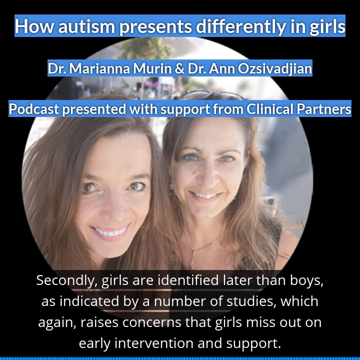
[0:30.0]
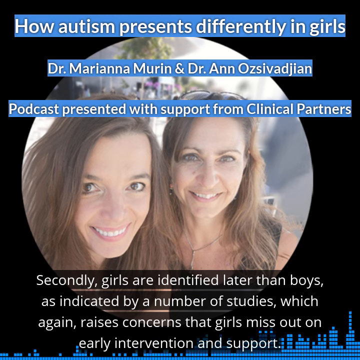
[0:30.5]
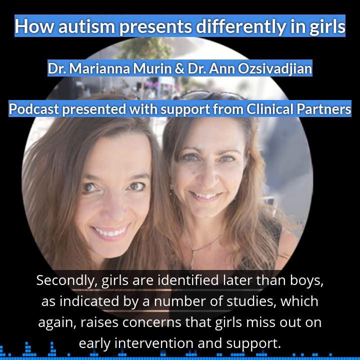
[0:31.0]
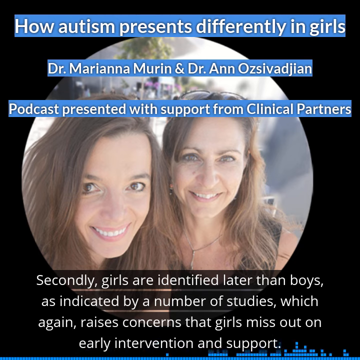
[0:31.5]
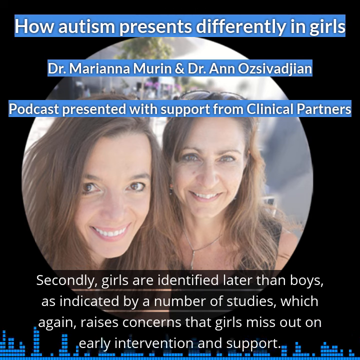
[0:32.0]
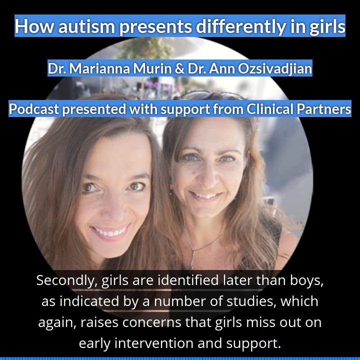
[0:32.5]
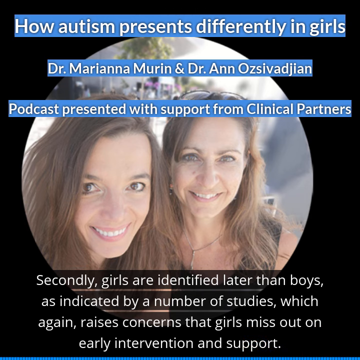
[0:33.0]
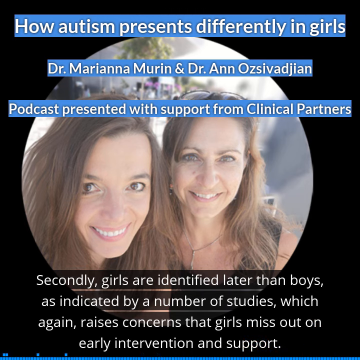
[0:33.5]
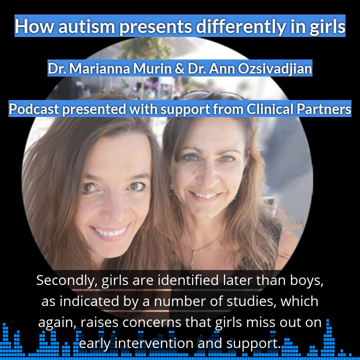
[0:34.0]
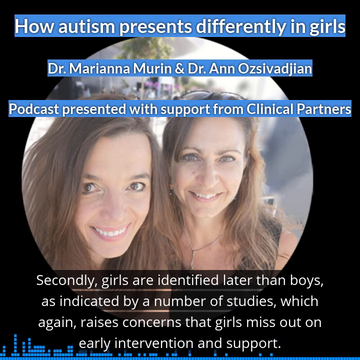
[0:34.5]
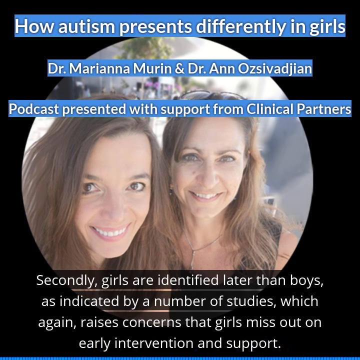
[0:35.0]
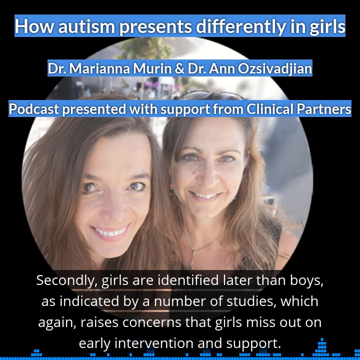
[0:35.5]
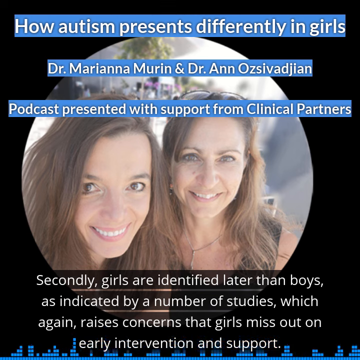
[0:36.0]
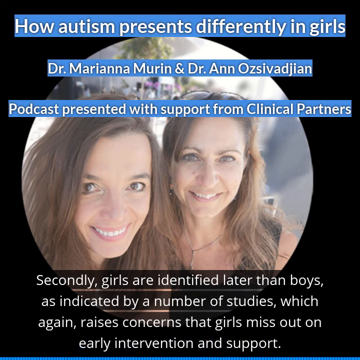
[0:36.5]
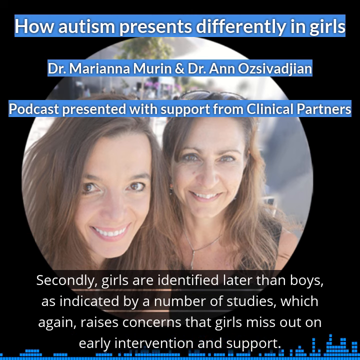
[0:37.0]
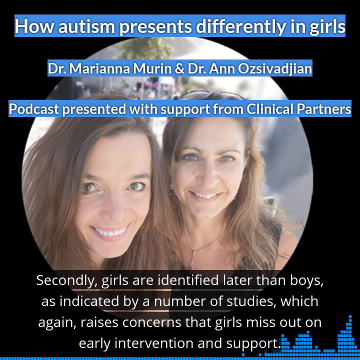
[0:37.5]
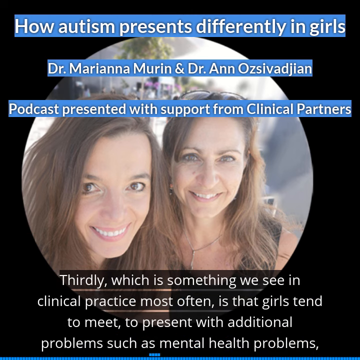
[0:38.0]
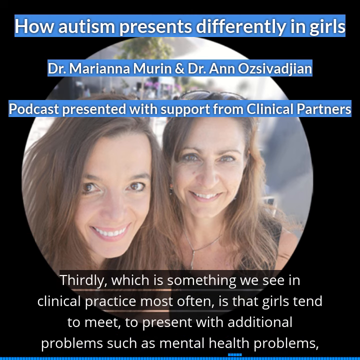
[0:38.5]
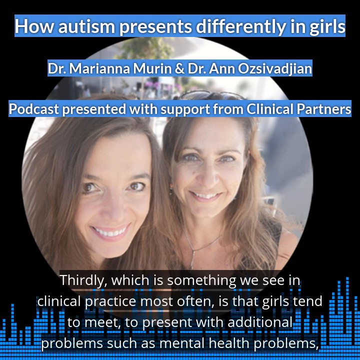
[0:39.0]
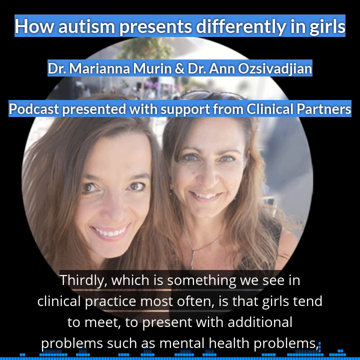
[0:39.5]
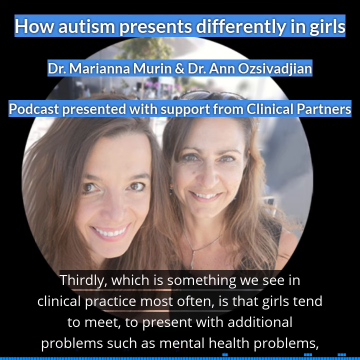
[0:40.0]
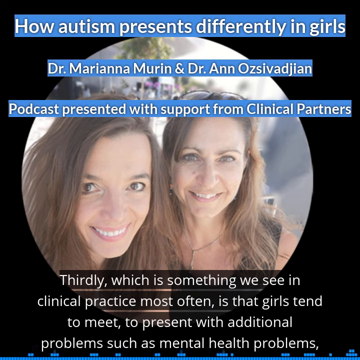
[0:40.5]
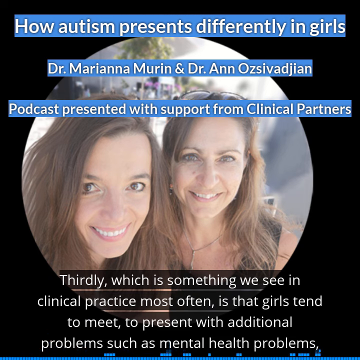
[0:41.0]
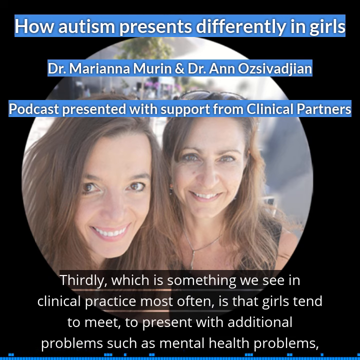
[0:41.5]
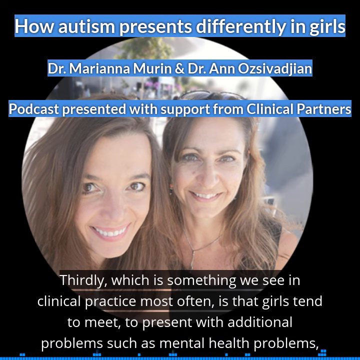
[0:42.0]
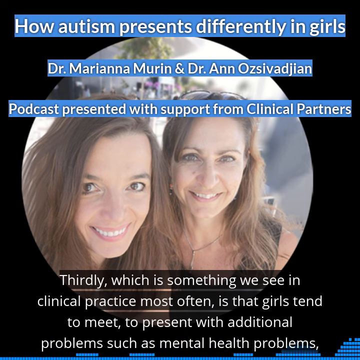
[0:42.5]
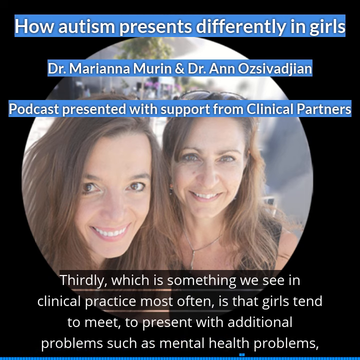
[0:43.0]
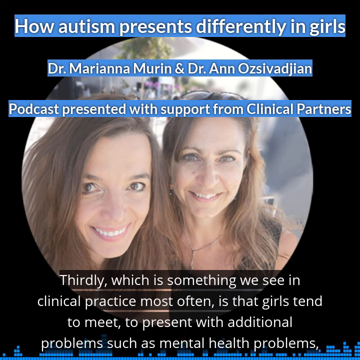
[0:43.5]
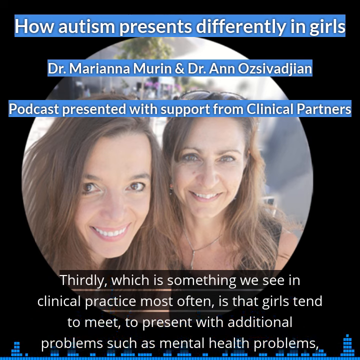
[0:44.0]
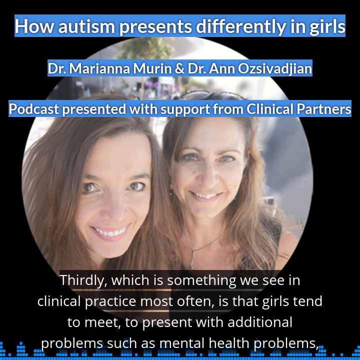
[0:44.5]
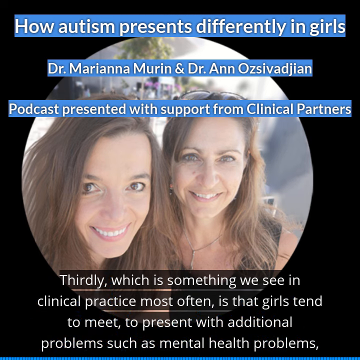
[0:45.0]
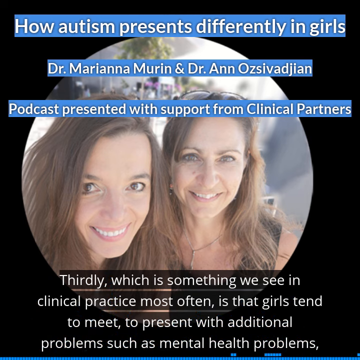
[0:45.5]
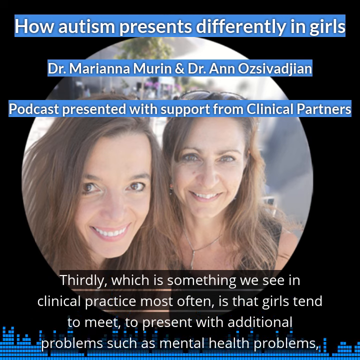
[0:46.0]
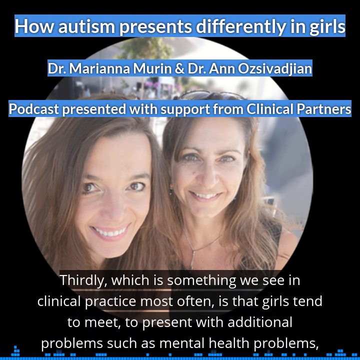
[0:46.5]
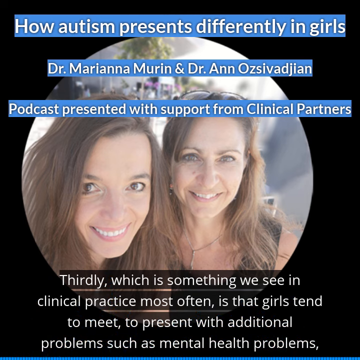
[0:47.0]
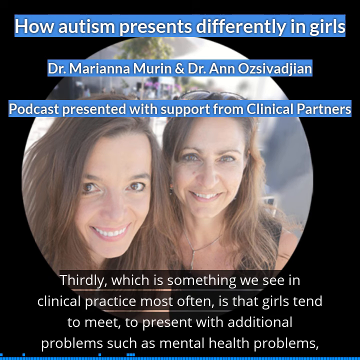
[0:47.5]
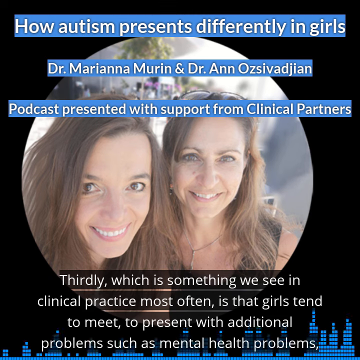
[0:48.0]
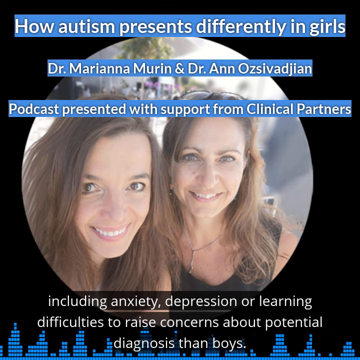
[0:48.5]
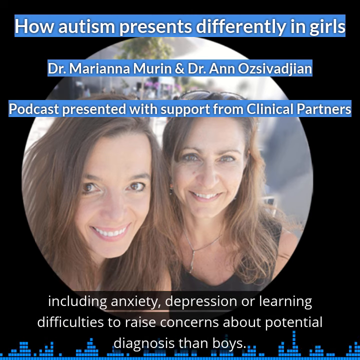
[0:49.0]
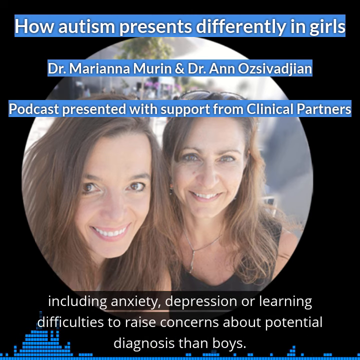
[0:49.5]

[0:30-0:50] The podcast screen continues with a circular image of two girls, both with dark hair and light skin, on a black background. At the top of the screen are the title, the names of the two doctors, and information about the podcast and its sponsors, in white text on a blue highlight. Below the image are captions for the podcast in white text highlighted in black. The captions state that autism in girls is usually identified later than in boys, so they miss out on early intervention, and that girls with autism tend to have more mental health issues, such as anxiety, depression, or learning difficulties. Behind the captions are blue flashing bars, apparently indicating audio or voice changes in the podcast.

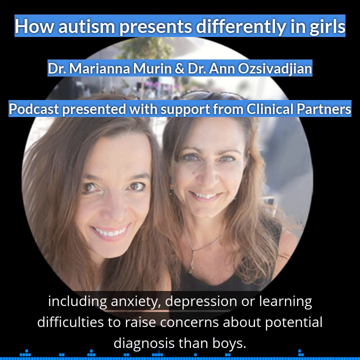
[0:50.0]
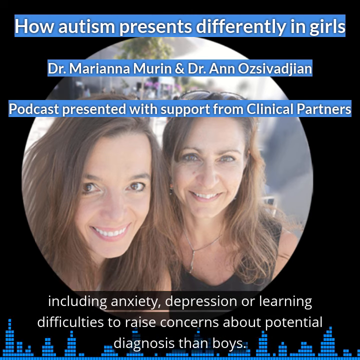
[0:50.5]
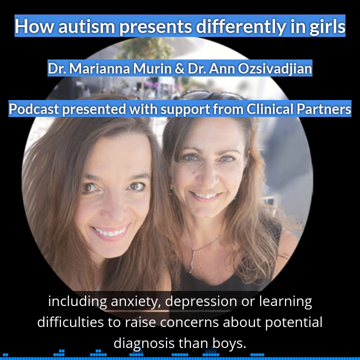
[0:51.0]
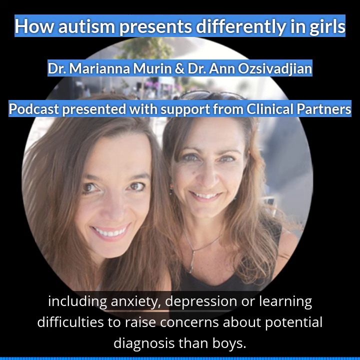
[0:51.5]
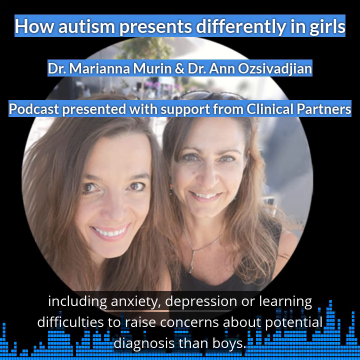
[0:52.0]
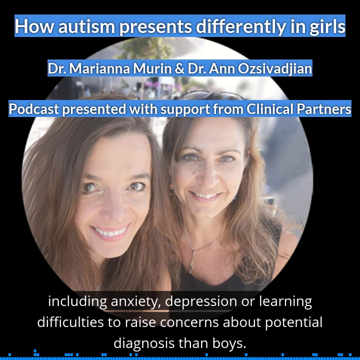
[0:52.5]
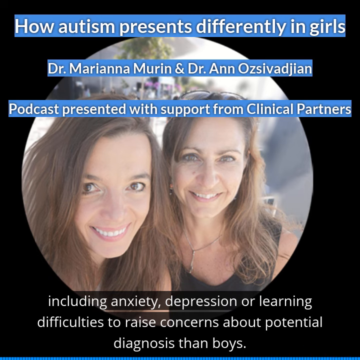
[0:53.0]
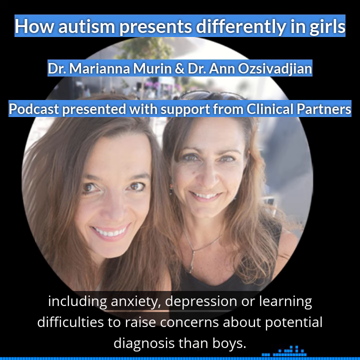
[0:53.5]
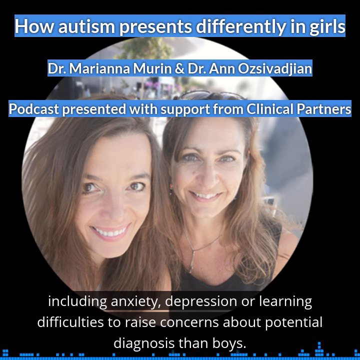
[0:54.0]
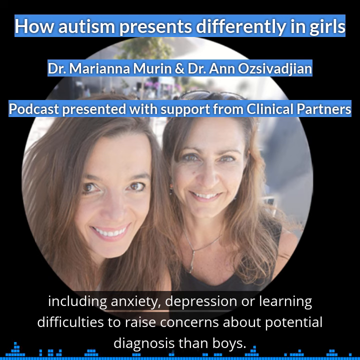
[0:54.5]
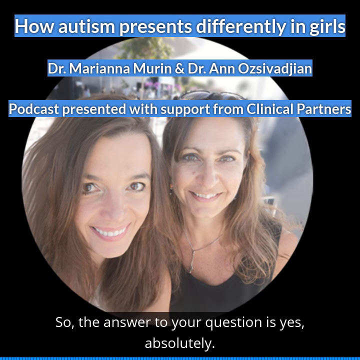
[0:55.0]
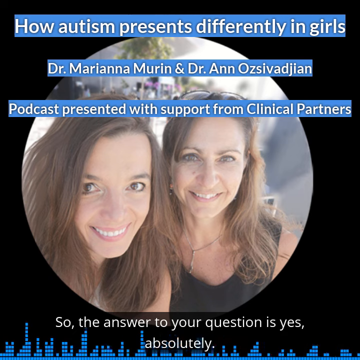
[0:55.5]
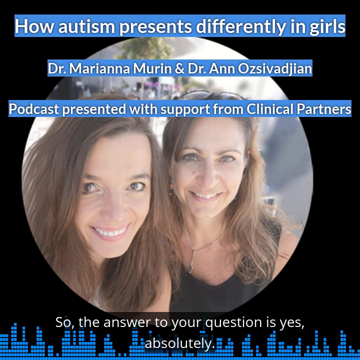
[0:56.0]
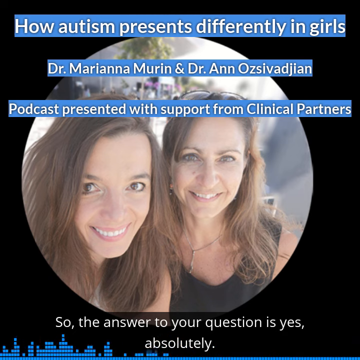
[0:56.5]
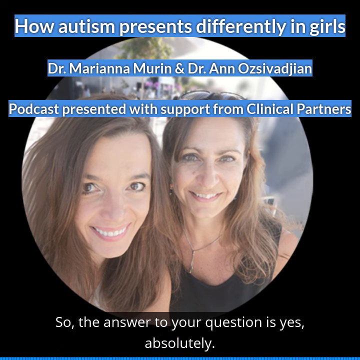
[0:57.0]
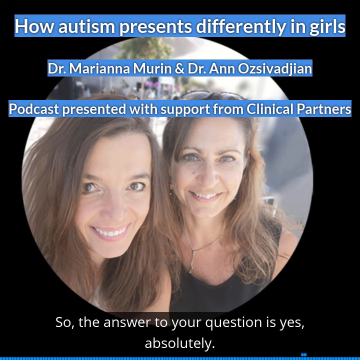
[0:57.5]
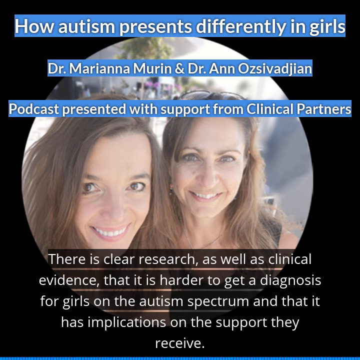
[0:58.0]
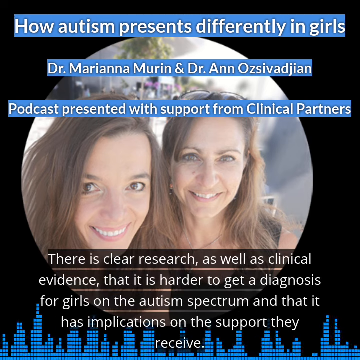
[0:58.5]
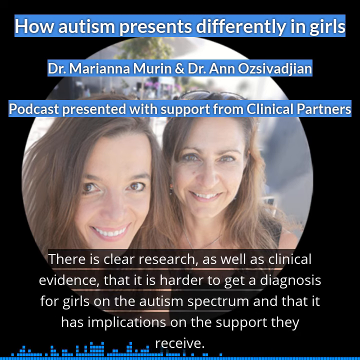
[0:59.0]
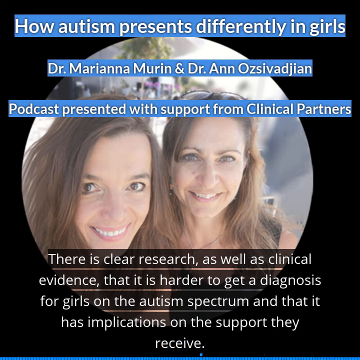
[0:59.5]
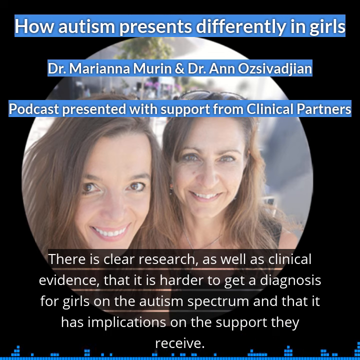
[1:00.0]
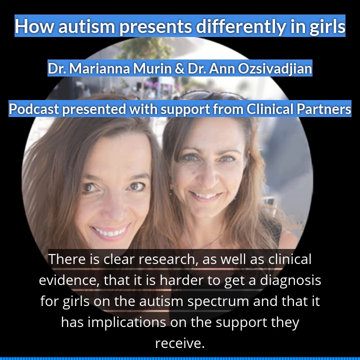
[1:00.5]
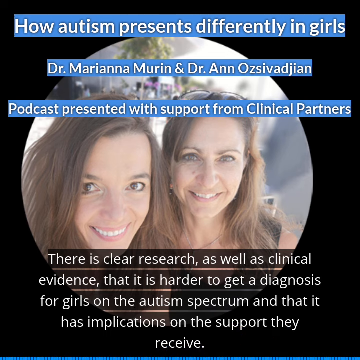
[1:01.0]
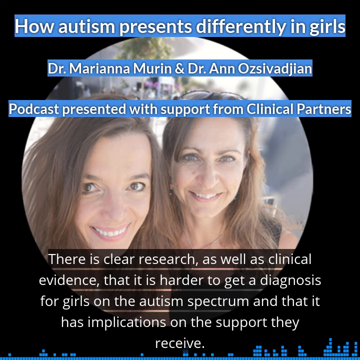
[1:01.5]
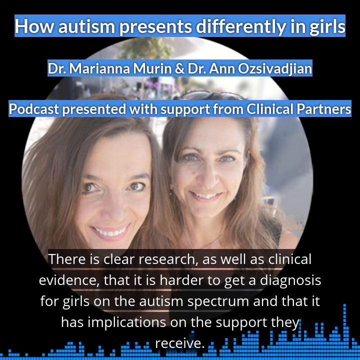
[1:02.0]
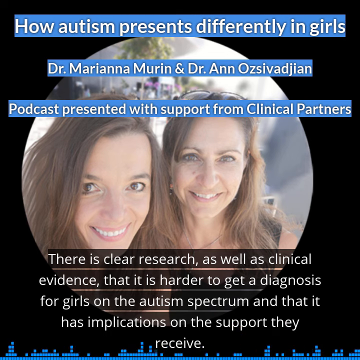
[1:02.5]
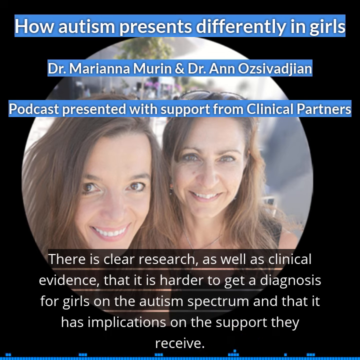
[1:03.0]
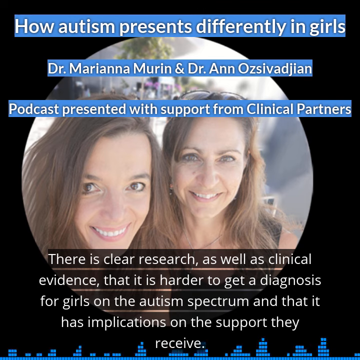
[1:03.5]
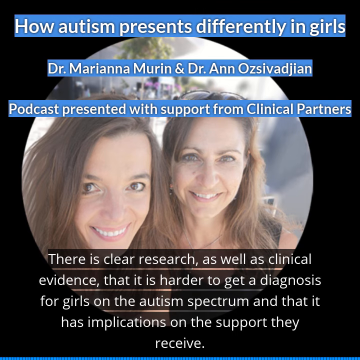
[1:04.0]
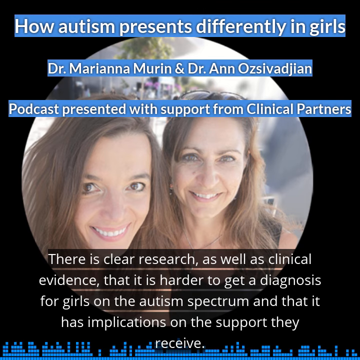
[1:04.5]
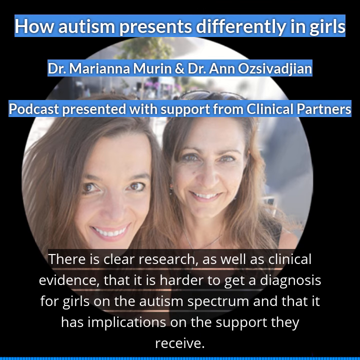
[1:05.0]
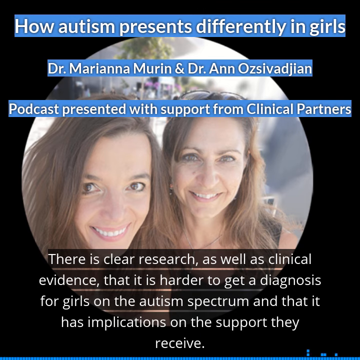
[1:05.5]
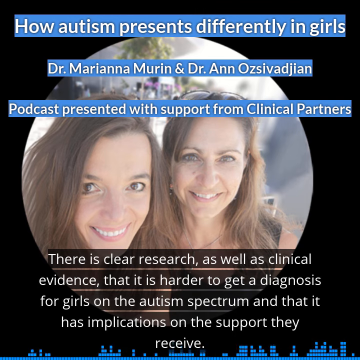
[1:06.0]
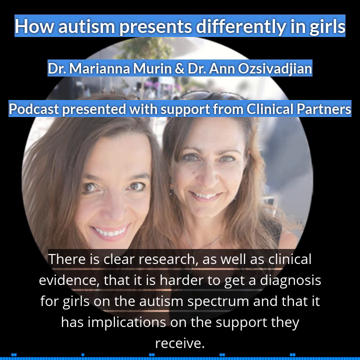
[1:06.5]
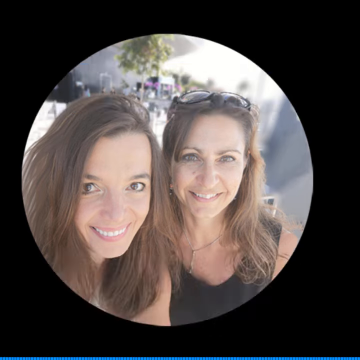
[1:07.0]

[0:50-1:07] The podcast screen about how autism presents differently in girls continues. On a black background is a circular image of two women, both fair-skinned with brown hair. At the top of the screen, blue-highlighted information in white text gives the title, the names of the two doctors involved, and that the podcast is sponsored by local clinical partners. Below the circular image are captions in white text highlighted in black. They state that, based on studies, girls with autism are harder to diagnose and therefore miss out on early intervention, presenting this as a fact based on research. At the end, all of the text leaves the screen, and only the image of the two women remains, with no text around it.